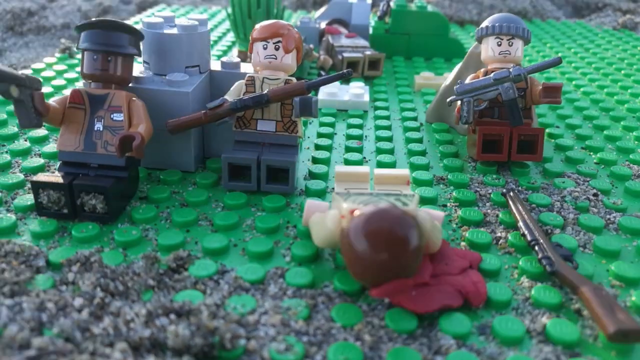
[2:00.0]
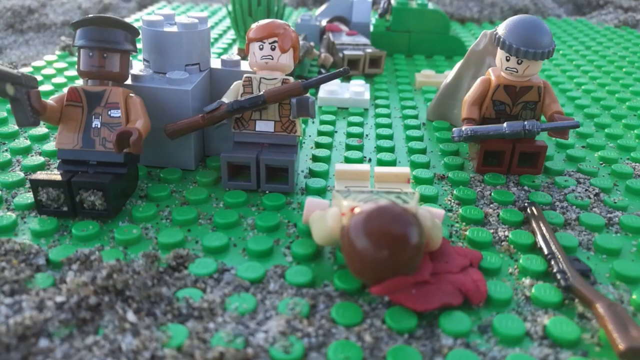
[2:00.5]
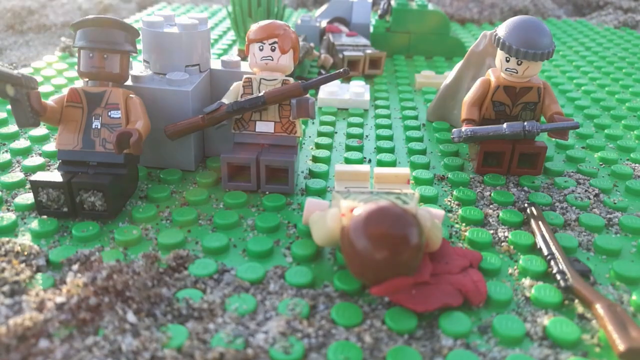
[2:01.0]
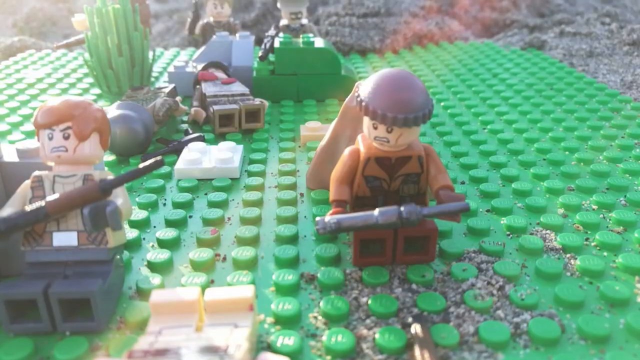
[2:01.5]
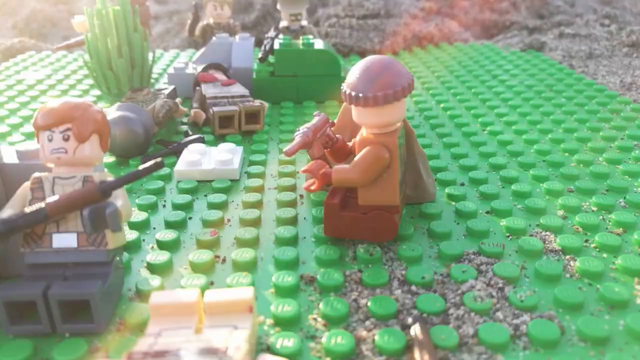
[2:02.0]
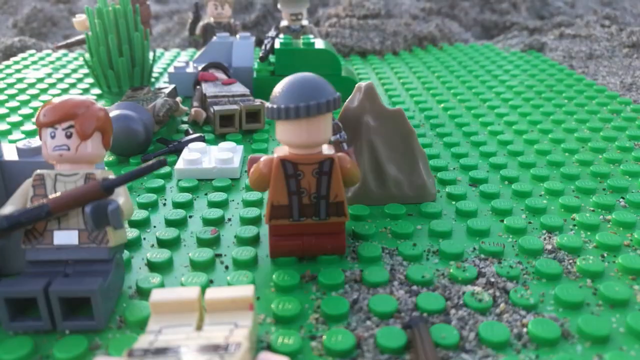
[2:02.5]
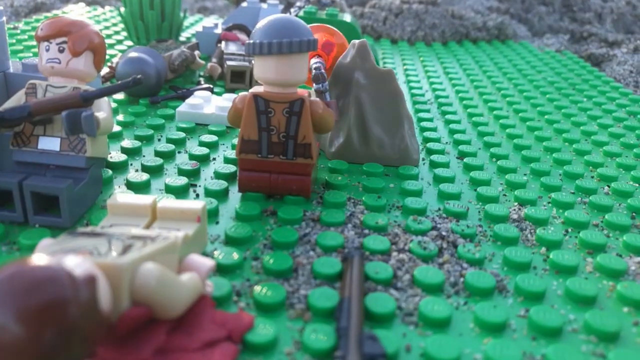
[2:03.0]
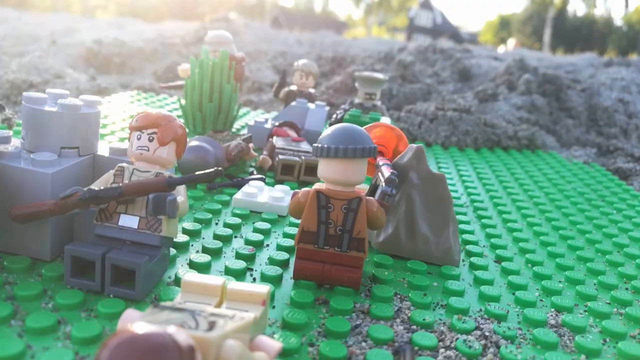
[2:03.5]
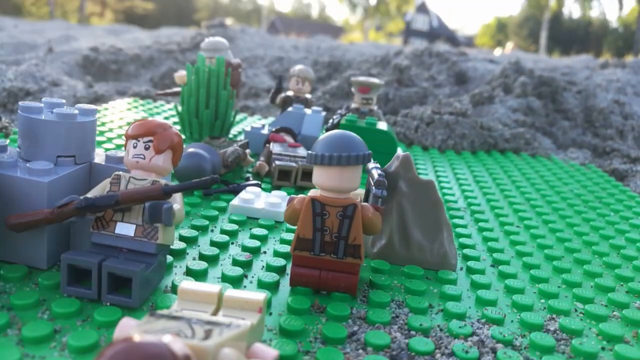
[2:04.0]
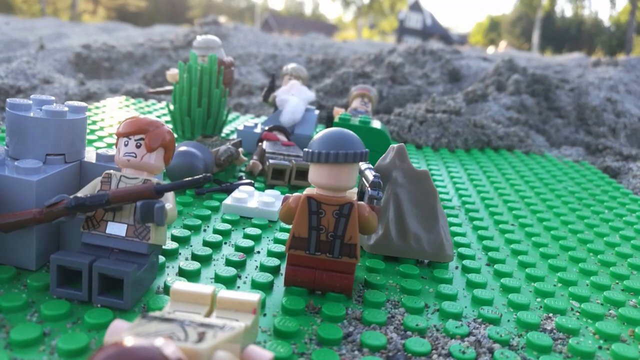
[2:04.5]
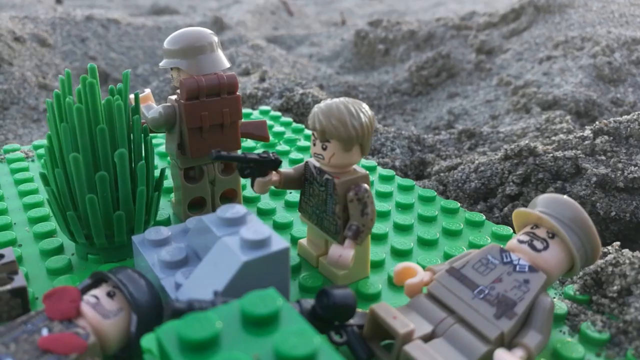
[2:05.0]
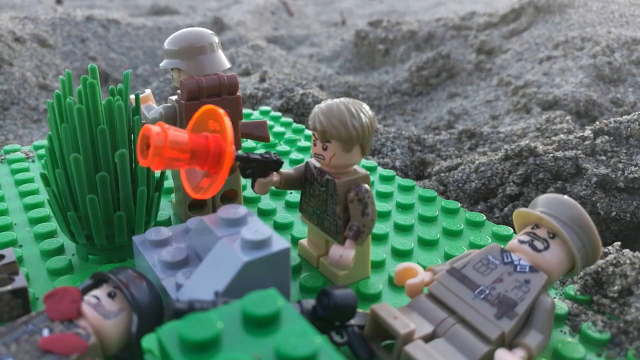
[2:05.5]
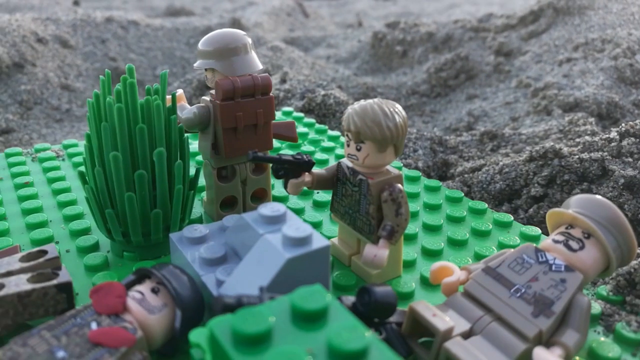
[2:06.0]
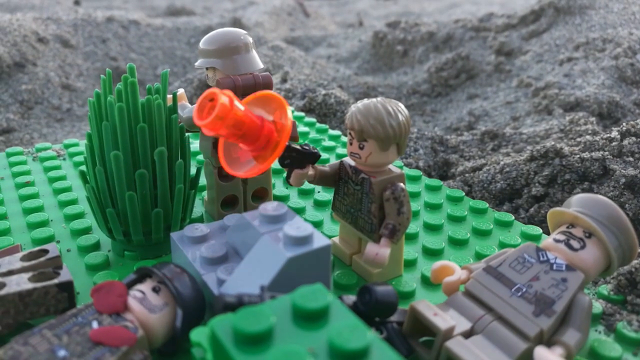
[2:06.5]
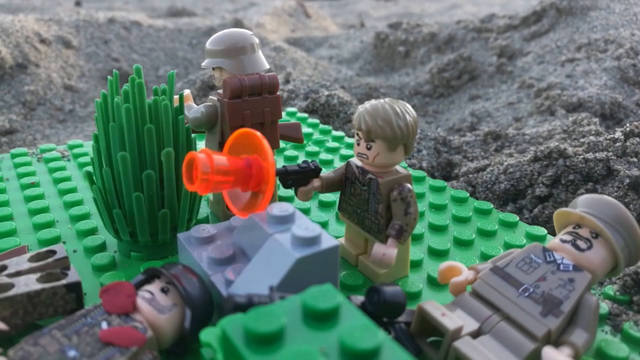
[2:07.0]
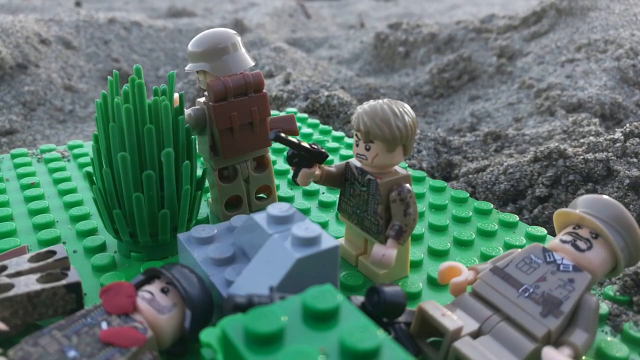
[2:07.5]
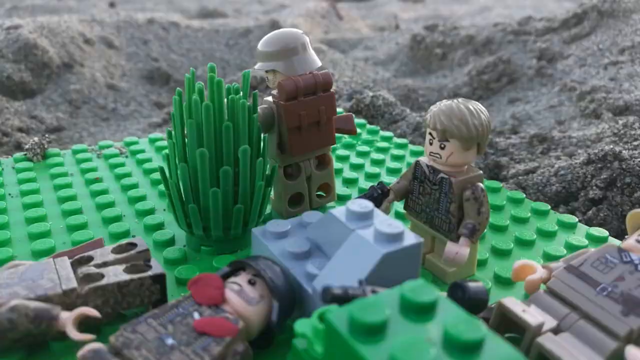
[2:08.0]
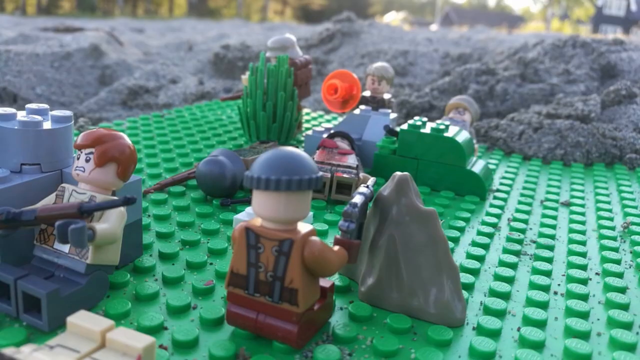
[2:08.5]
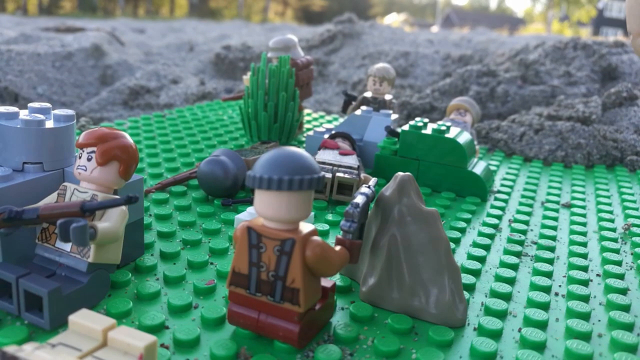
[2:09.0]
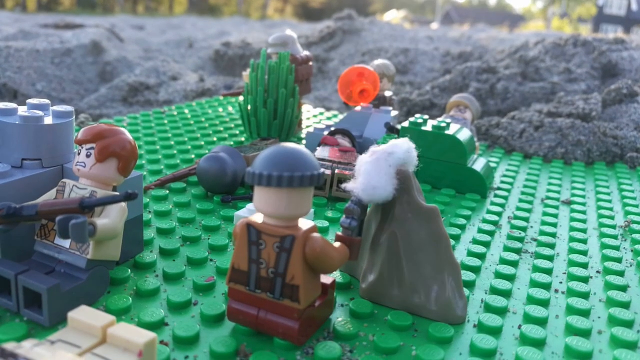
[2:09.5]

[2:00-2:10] A figure with a pistol, apparently a German, fires away. Some Germans still remain, though fewer than before, and a dead figure lies in the middle of the frame. The figures stand on a kind of green LEGO, apparently meant to be grass, and the two sides keep firing at each other with no clear result. Each time they fire, orange plastic special effect cones appear at the ends of the guns to simulate the muzzle flash.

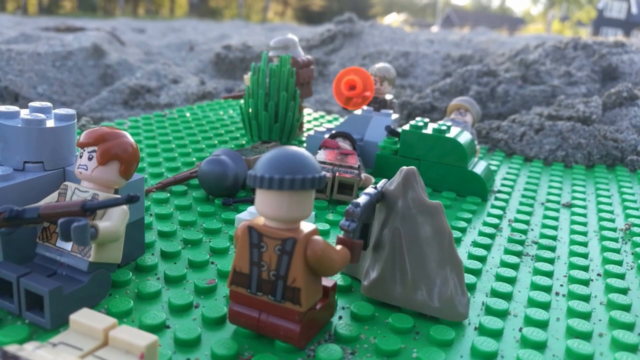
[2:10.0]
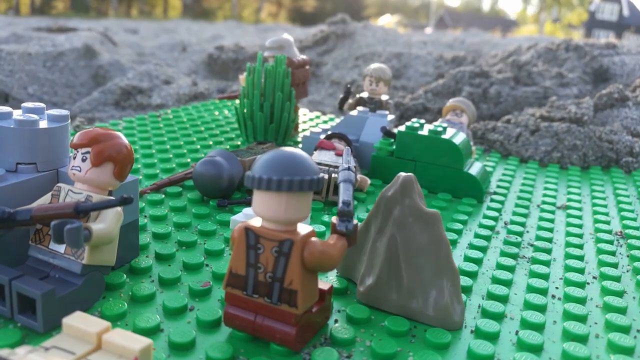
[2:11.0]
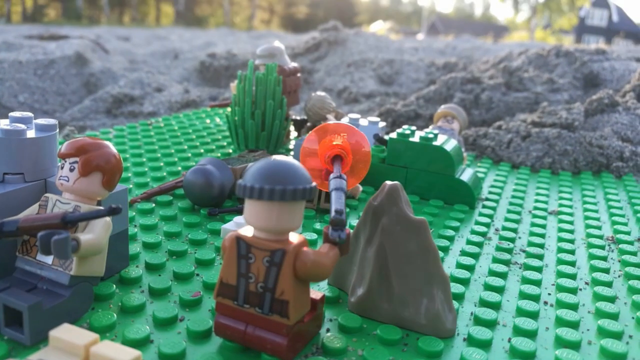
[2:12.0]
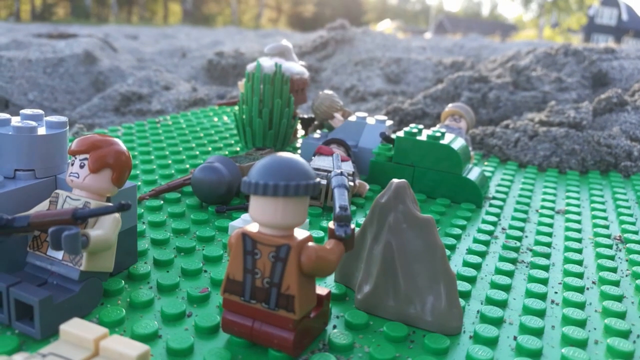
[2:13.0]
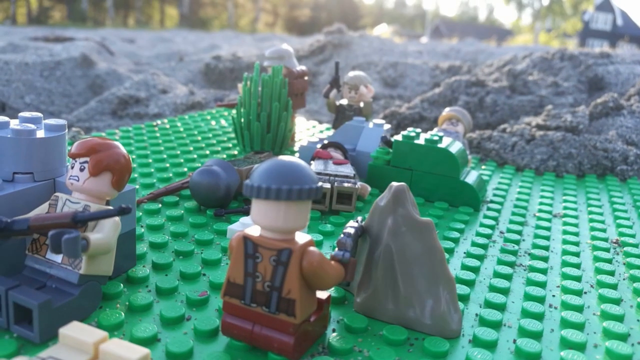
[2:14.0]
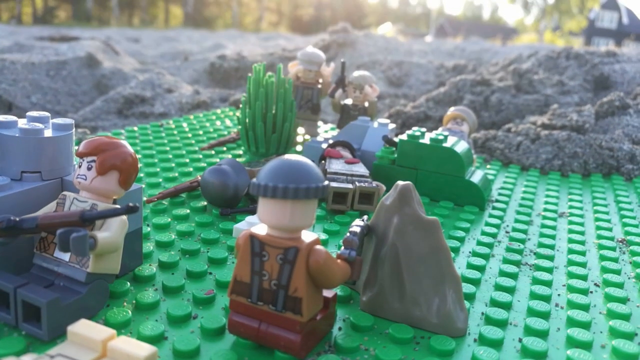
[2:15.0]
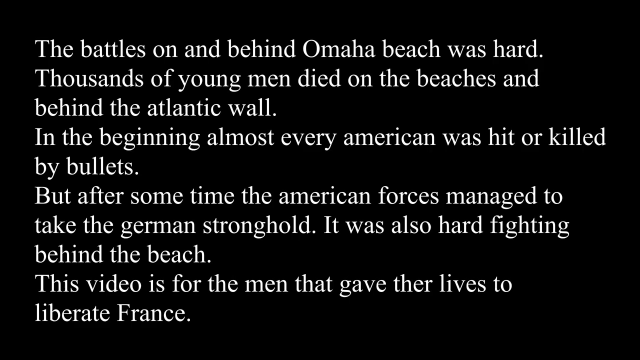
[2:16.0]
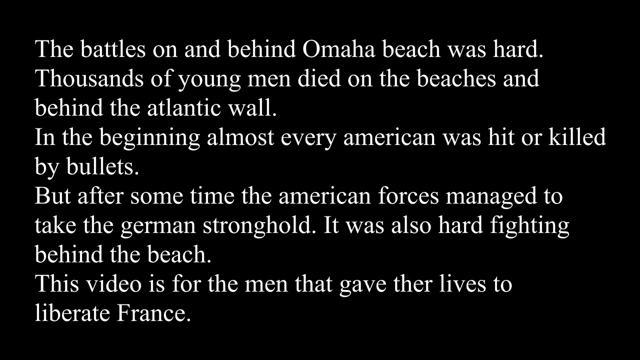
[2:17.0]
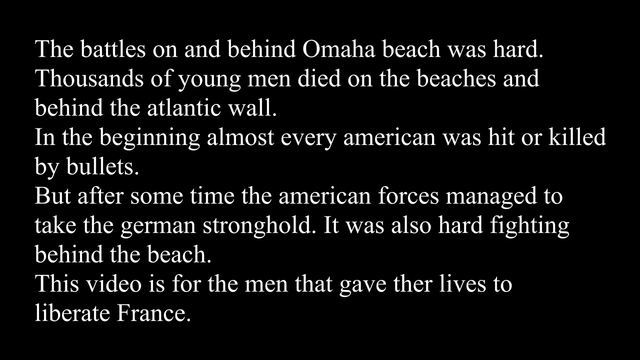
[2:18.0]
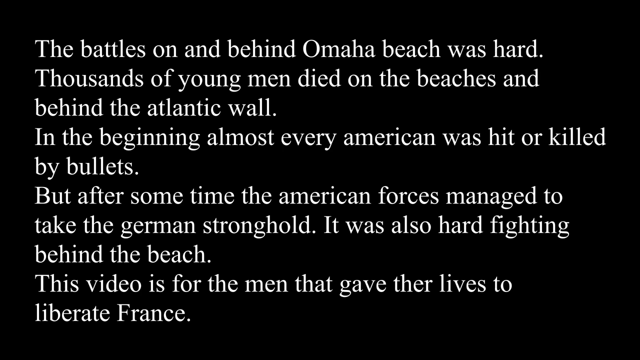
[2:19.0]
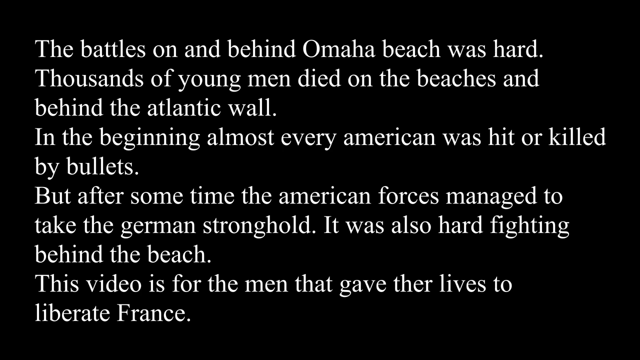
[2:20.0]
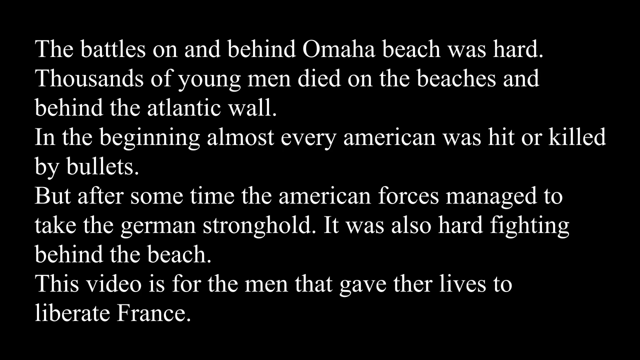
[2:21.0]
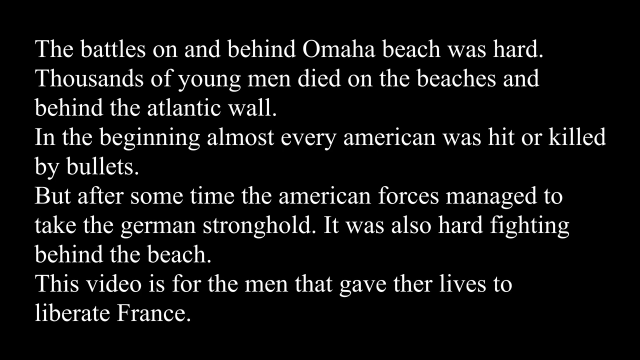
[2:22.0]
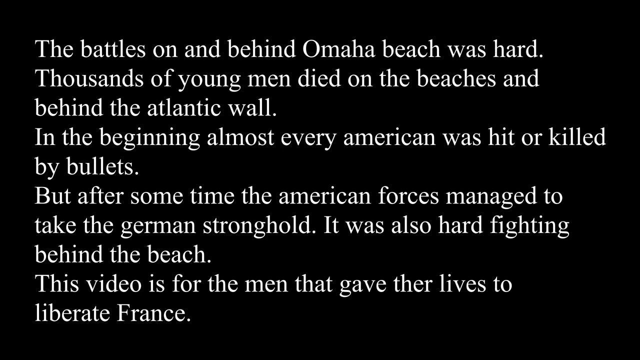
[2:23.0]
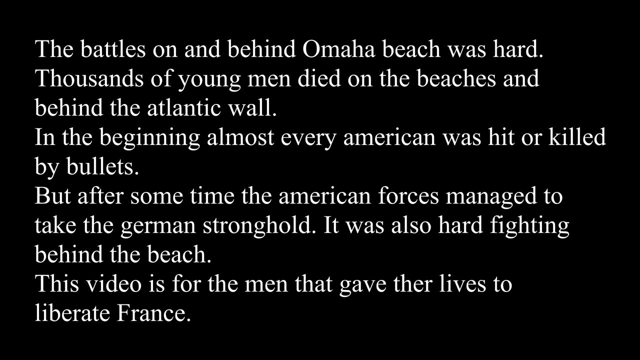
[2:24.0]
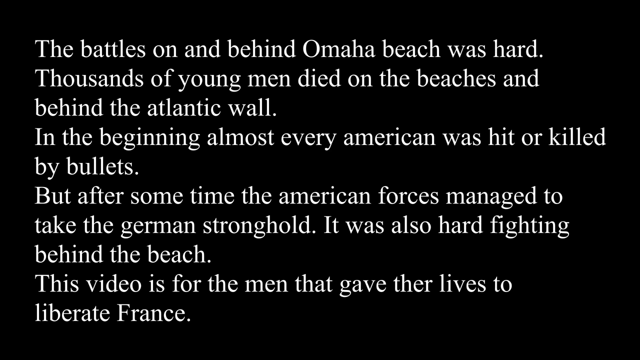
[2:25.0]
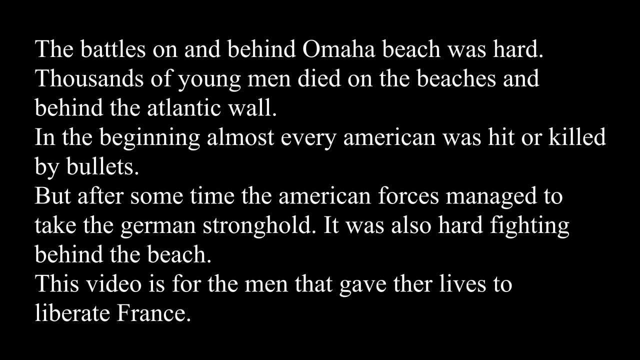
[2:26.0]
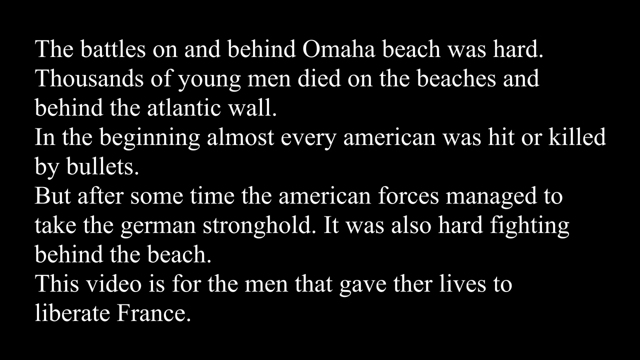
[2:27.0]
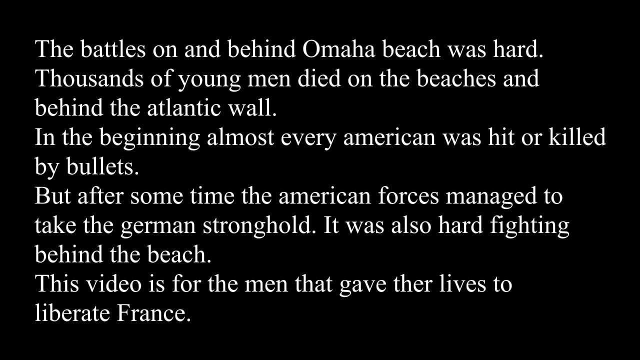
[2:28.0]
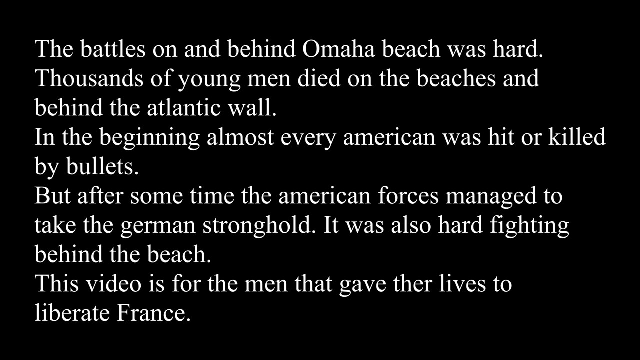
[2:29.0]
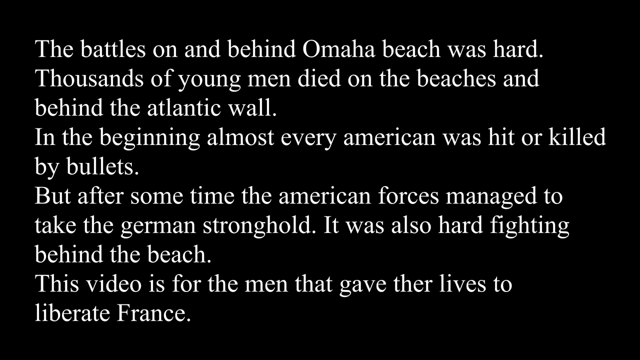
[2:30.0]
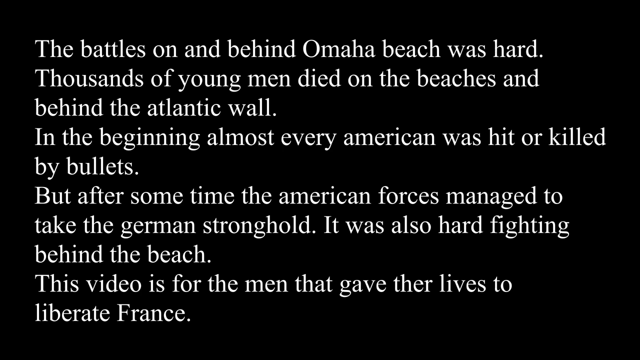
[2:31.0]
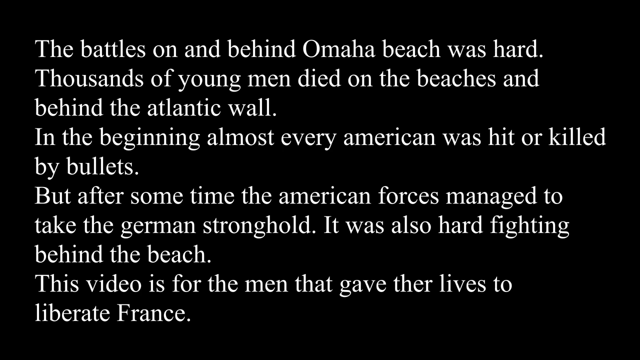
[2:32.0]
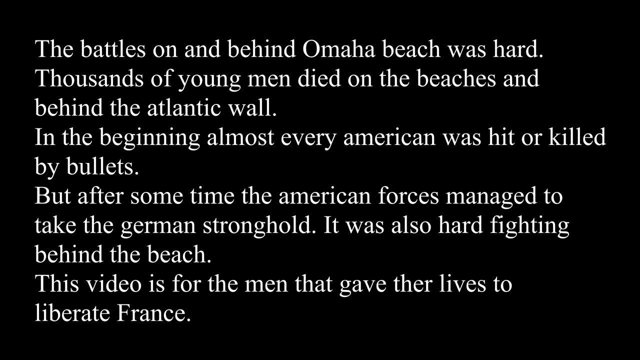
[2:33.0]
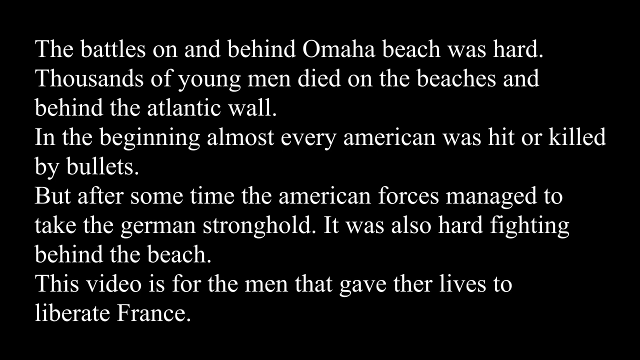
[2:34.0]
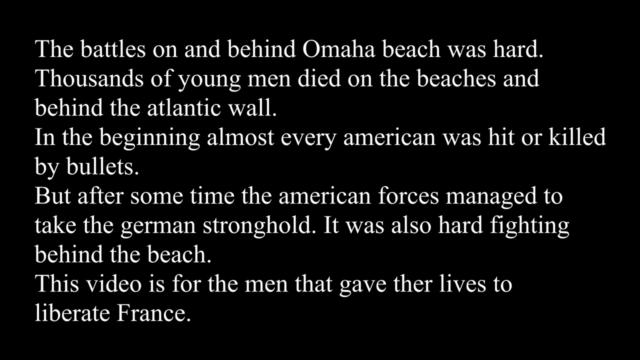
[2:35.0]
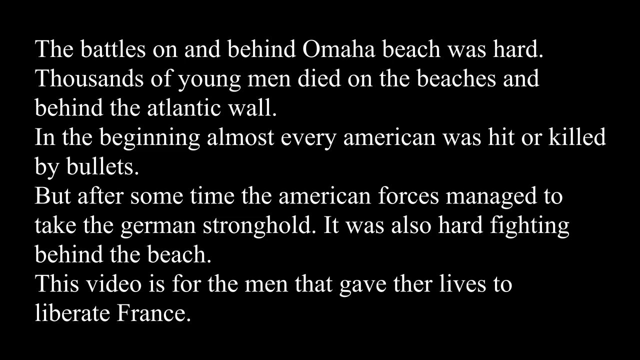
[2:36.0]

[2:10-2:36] The two sides keep firing at each other: two Americans and three Germans fight over the little patch of green LEGO grass. The action stops without showing the result, and the view switches to simple white text on a black background reading "So the battles on and behind Omaha beach was hard. Thousands of young men died on the beaches and behind the Atlantic wall. In the beginning almost every American was hit or killed by bullets", continuing with a line about the Americans taking the German stronghold, and then "It was also hard fighting behind the beach. This video is for the men that gave their lives to liberate France". The text remains on screen until the end of the video.